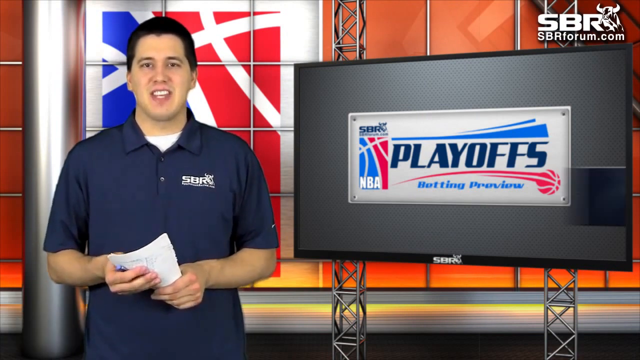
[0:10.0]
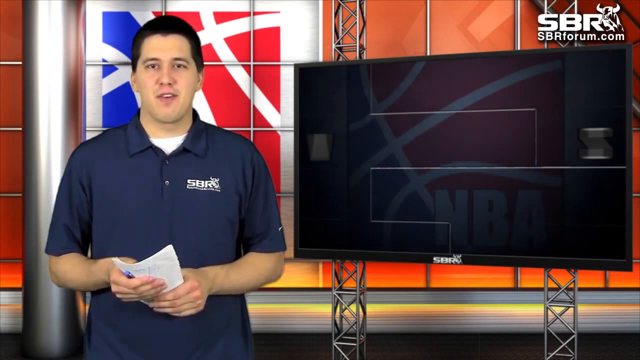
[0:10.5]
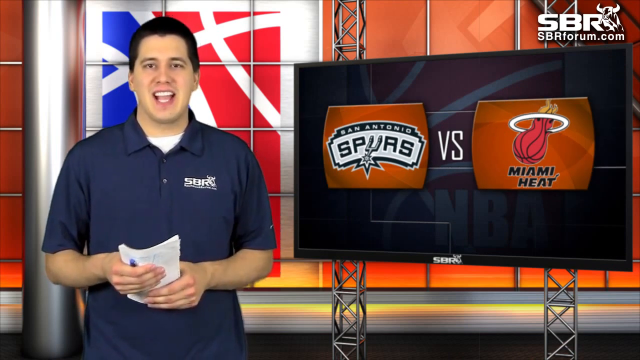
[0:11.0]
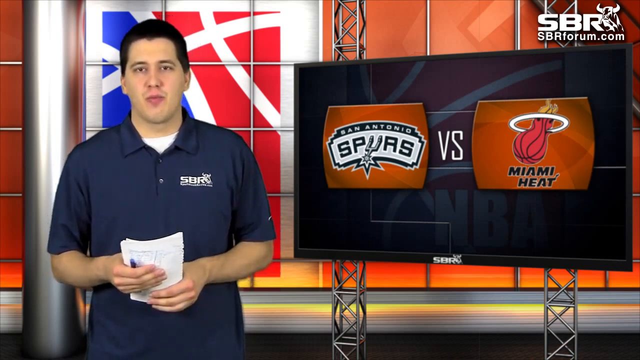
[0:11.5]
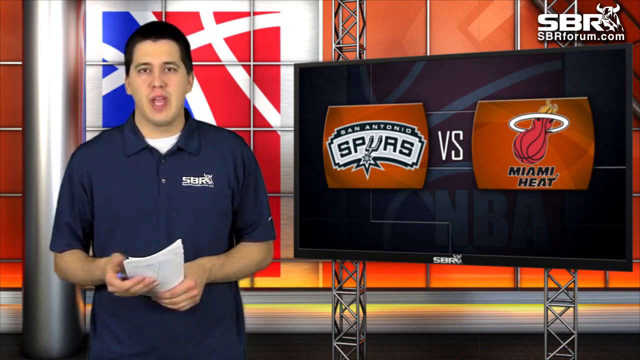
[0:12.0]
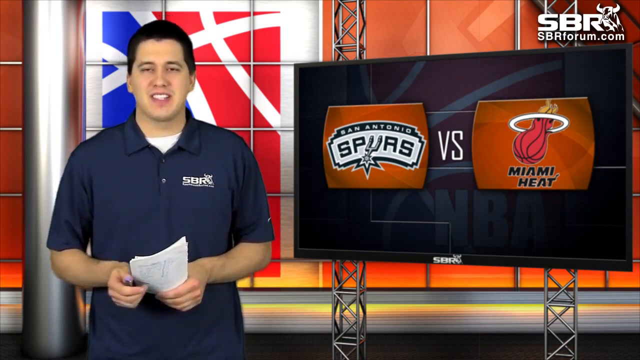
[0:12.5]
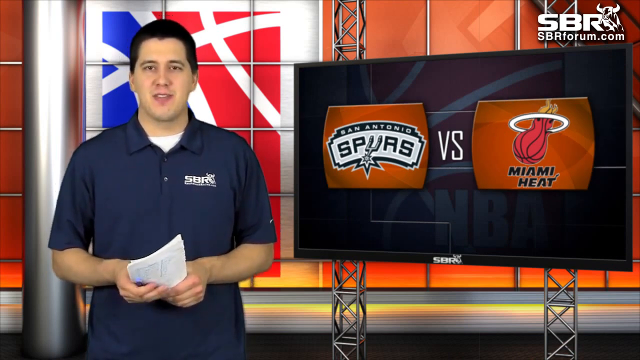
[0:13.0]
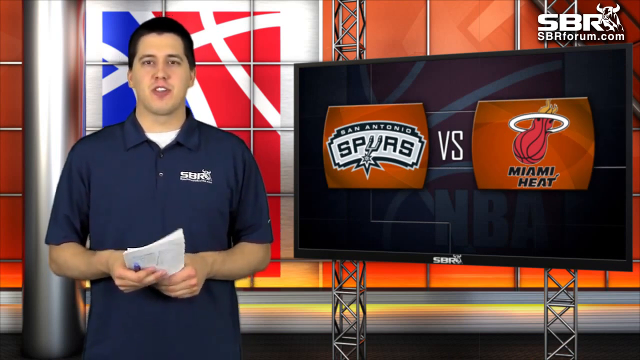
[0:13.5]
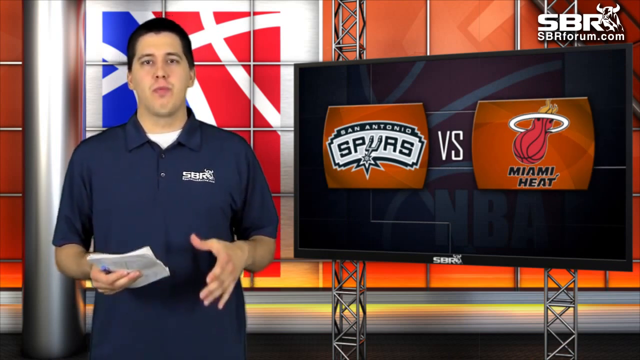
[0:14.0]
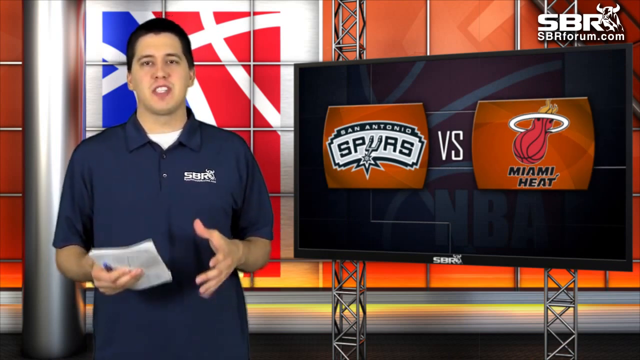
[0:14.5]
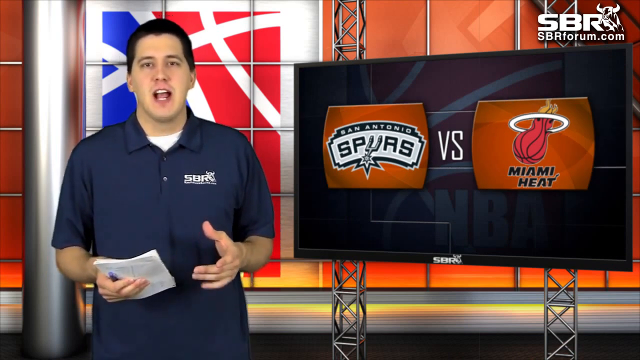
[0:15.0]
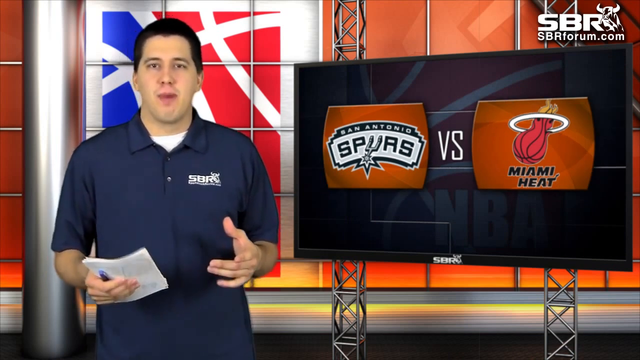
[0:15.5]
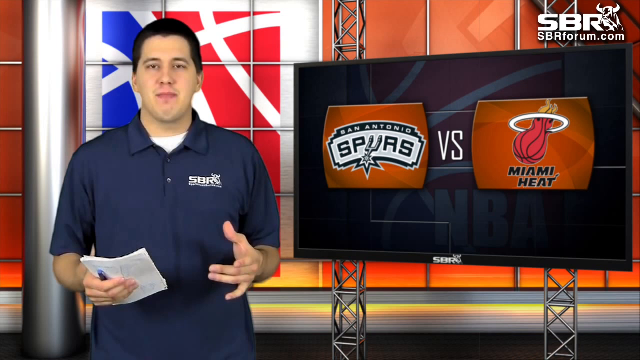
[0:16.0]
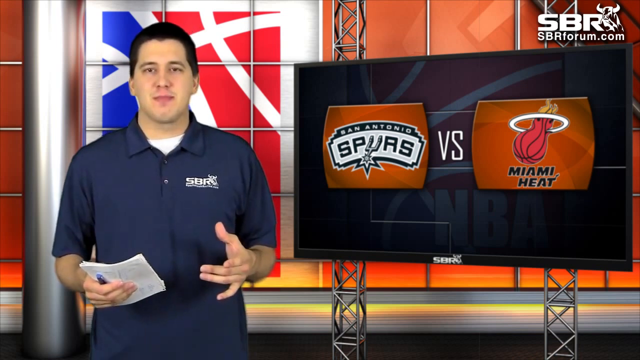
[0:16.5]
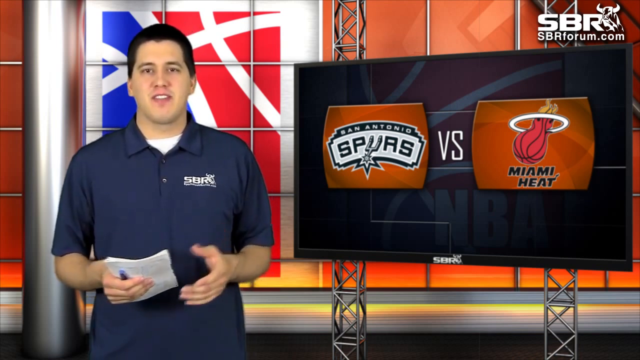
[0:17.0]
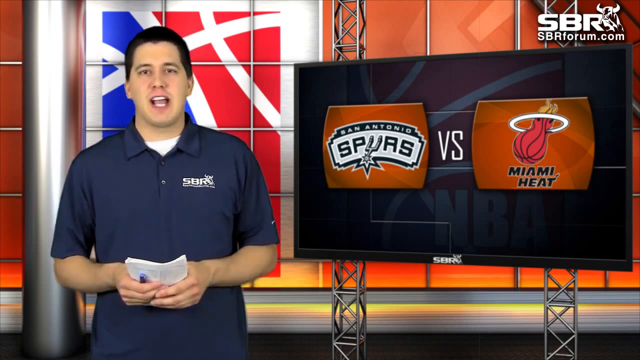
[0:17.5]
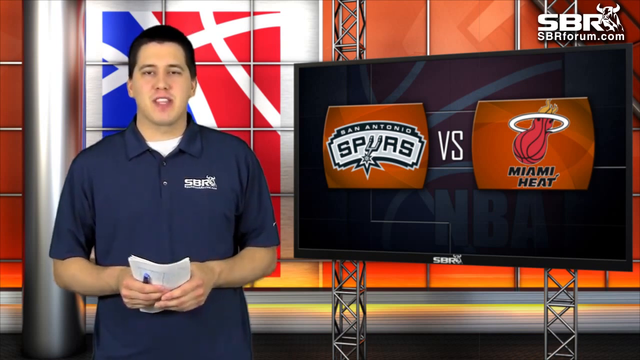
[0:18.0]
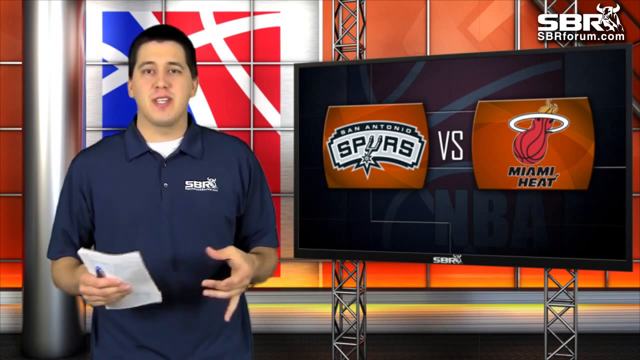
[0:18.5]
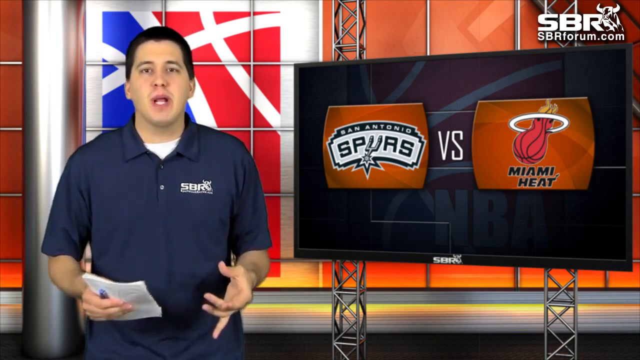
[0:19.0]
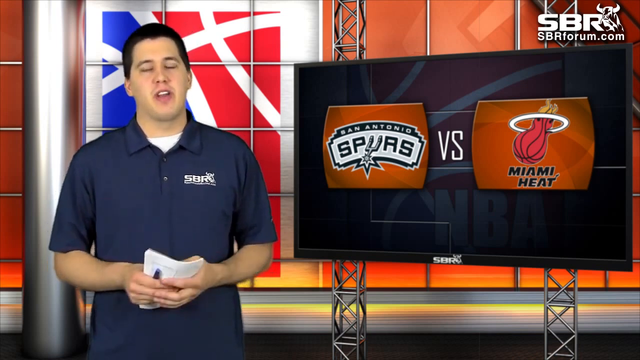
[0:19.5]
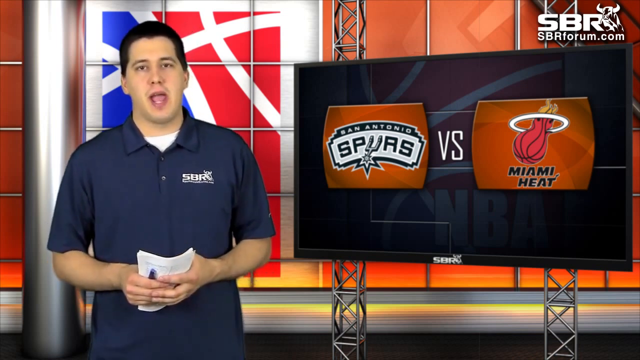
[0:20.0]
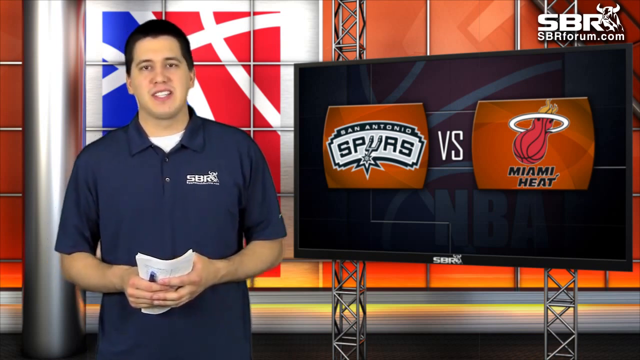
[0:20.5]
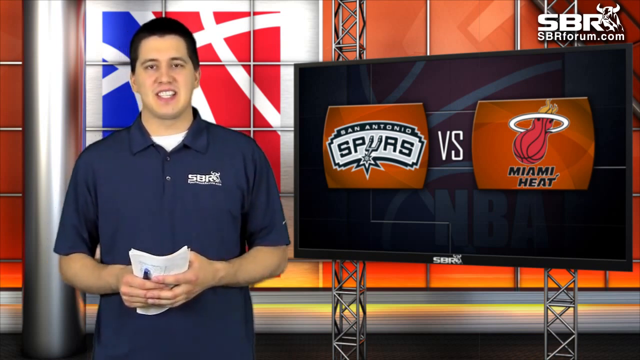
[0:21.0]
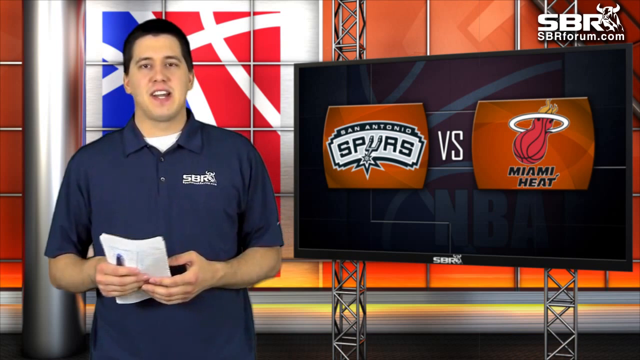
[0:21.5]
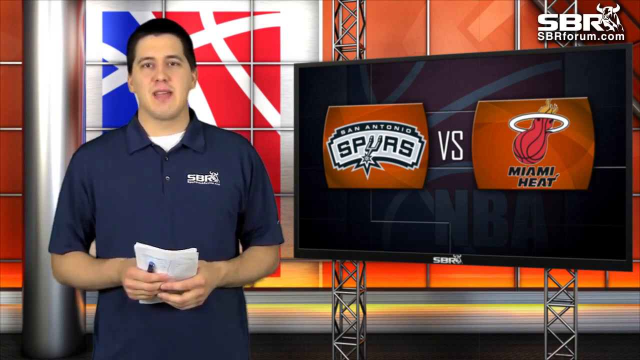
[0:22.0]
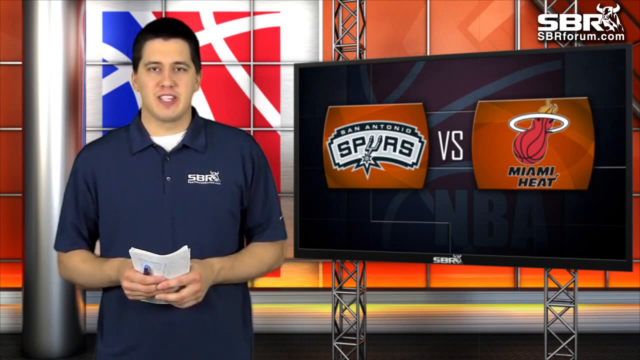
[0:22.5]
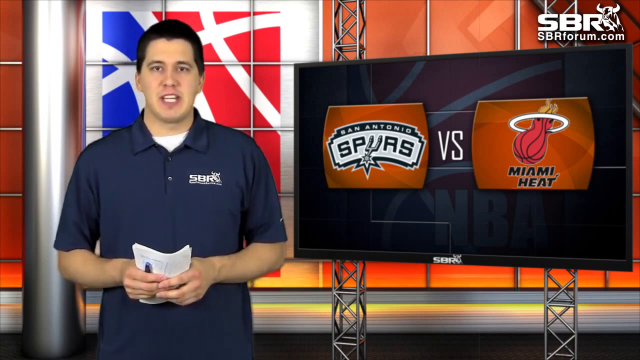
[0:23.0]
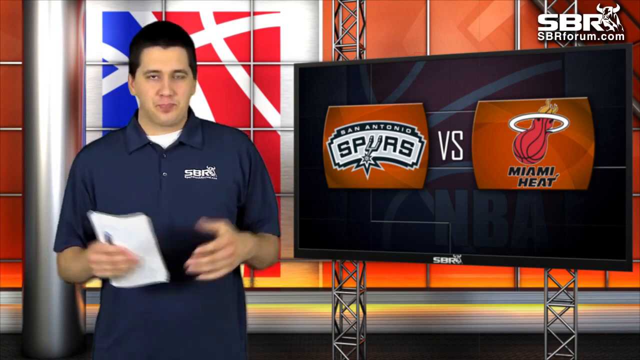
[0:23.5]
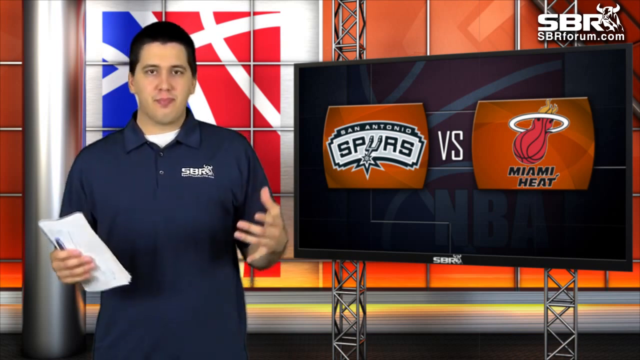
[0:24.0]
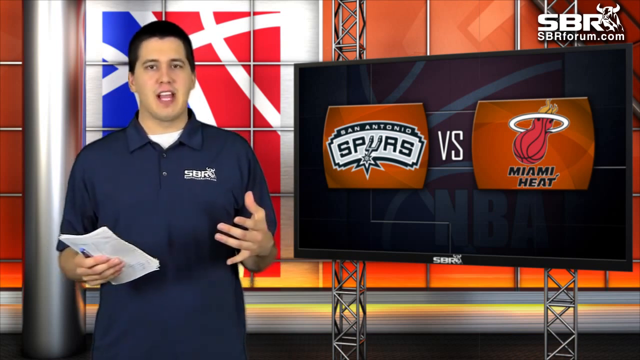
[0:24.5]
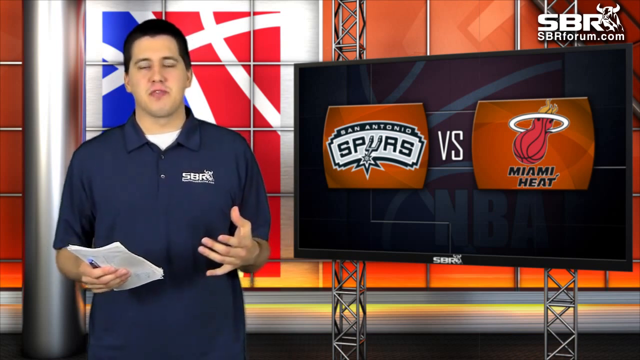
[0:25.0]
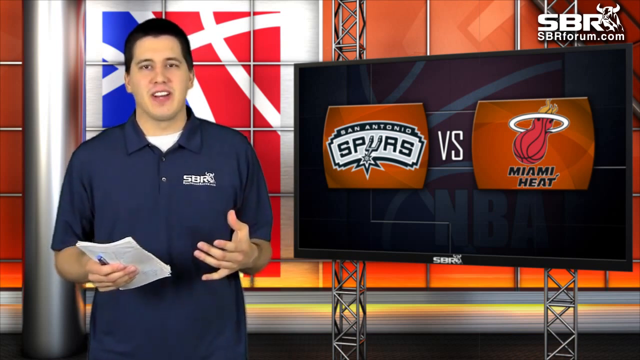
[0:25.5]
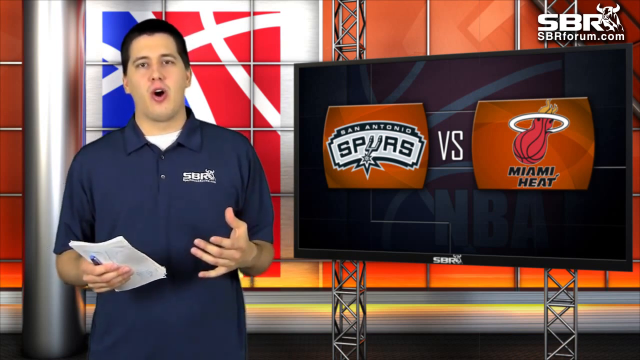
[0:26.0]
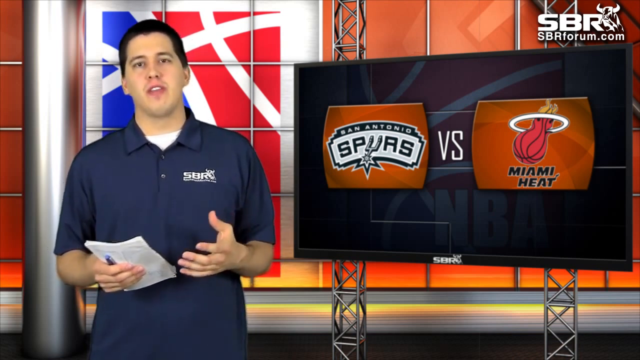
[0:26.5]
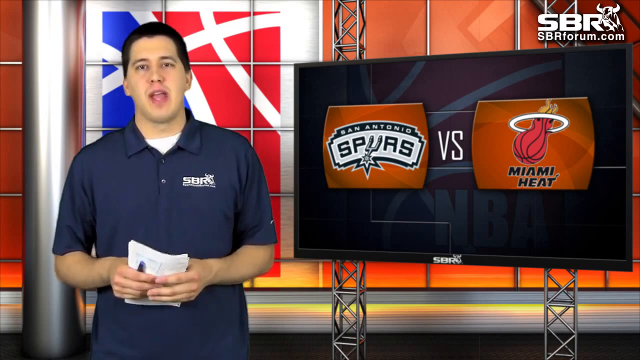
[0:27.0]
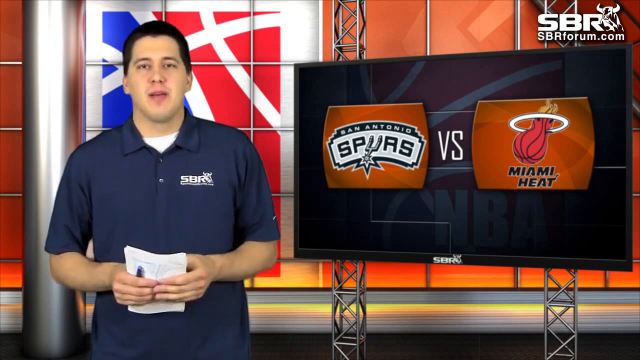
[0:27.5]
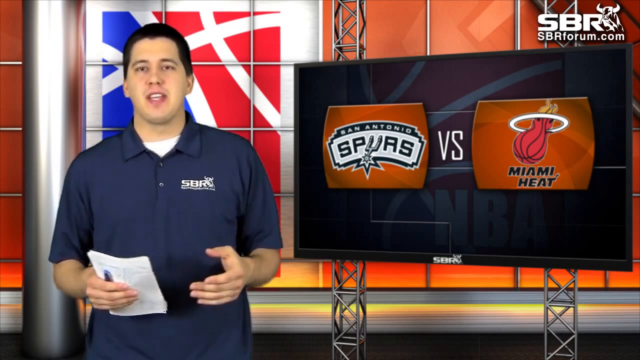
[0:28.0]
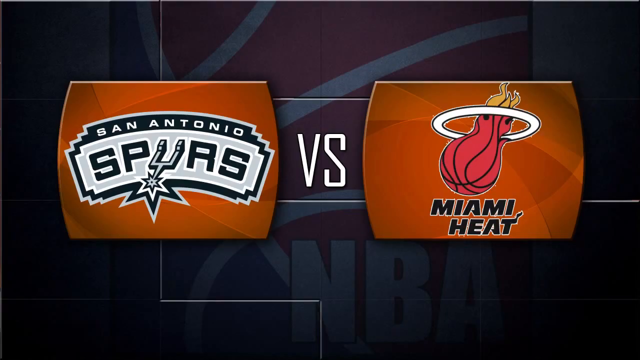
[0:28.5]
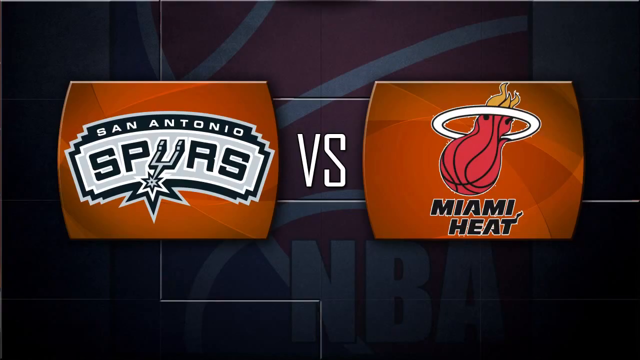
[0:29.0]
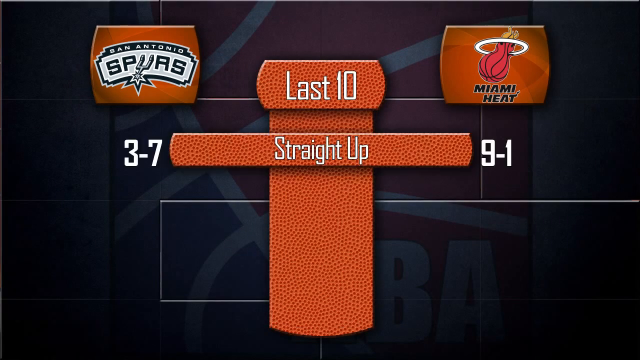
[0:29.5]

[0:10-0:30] On-screen text reads "Ospreys vs Miami Heat." The top right of the screen says "SBR Forum" and "sbrforum.com," and a poll appears in the top right as well. A man talks directly to the audience, focused and serious. He wears a blue polo shirt over a white t-shirt and has a piece of paper in front of him.